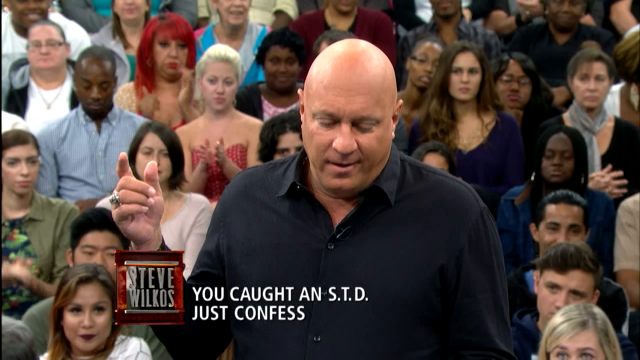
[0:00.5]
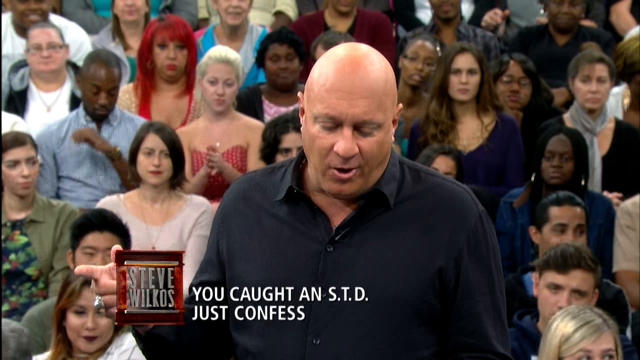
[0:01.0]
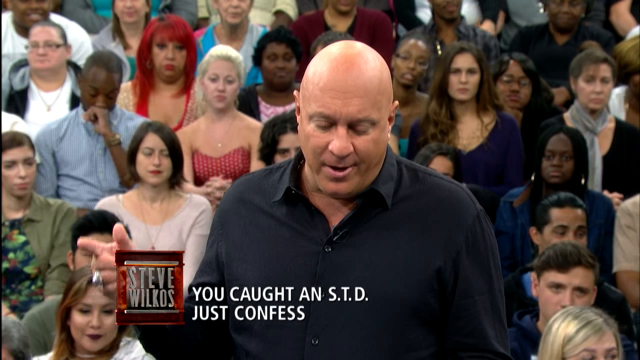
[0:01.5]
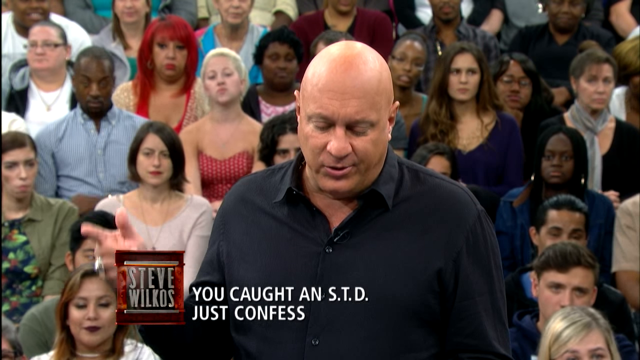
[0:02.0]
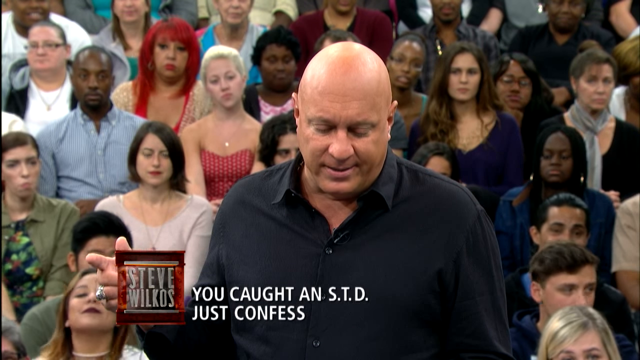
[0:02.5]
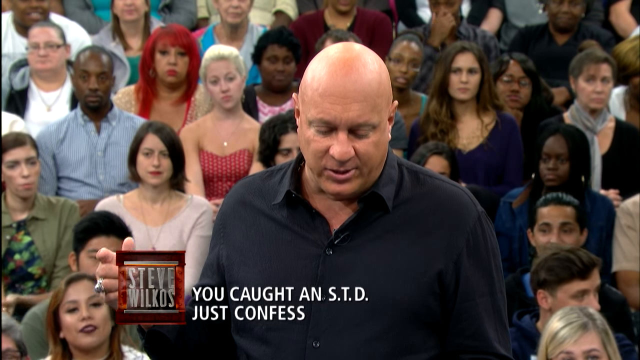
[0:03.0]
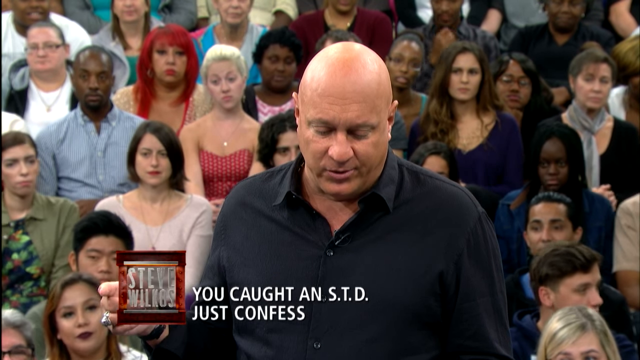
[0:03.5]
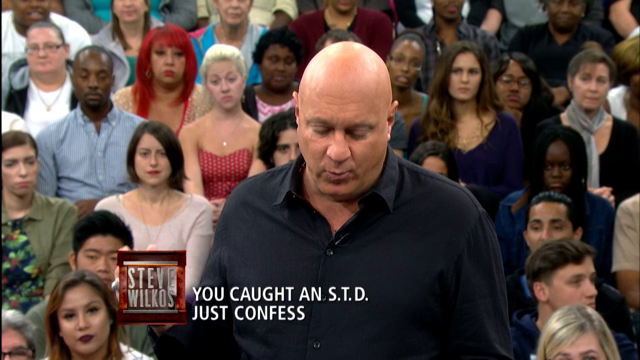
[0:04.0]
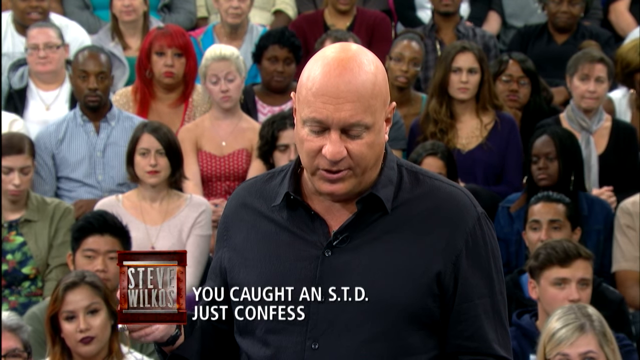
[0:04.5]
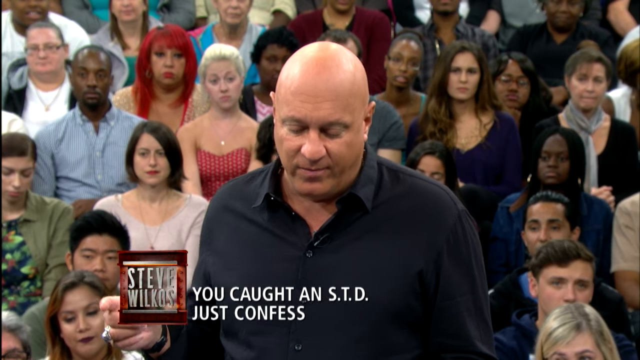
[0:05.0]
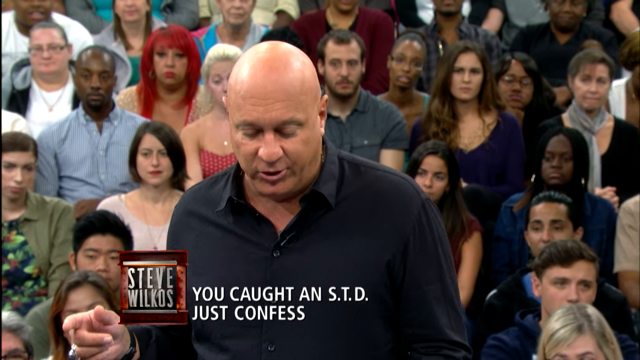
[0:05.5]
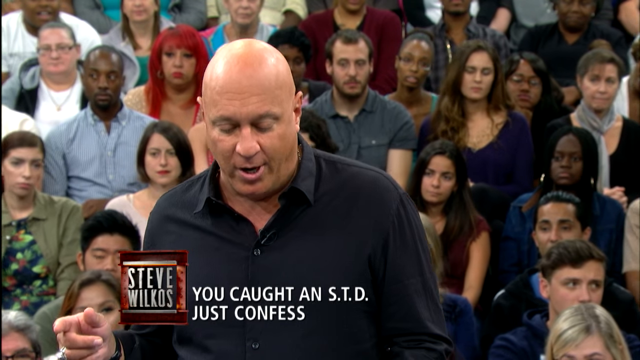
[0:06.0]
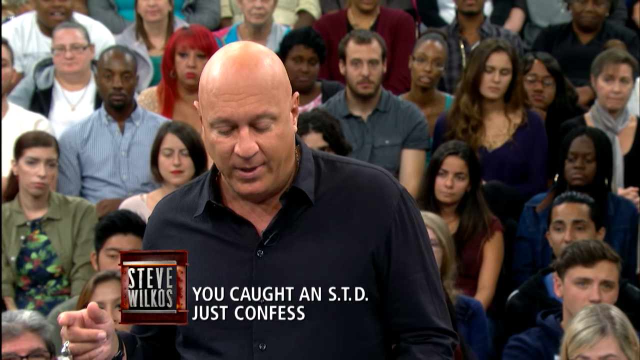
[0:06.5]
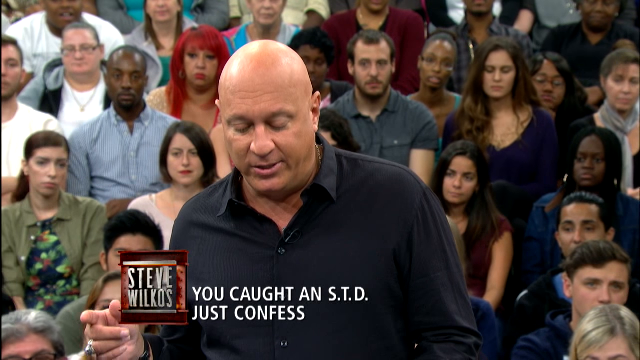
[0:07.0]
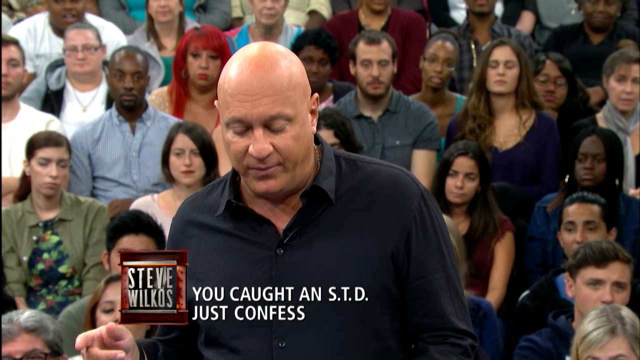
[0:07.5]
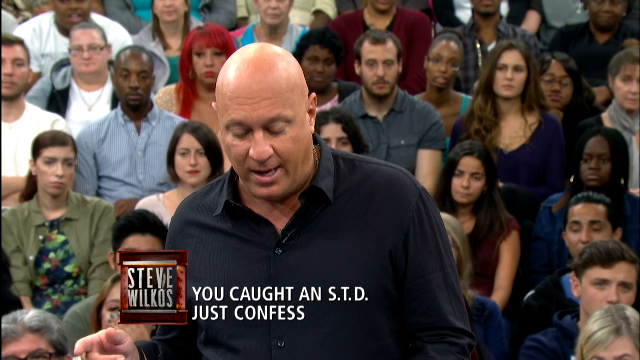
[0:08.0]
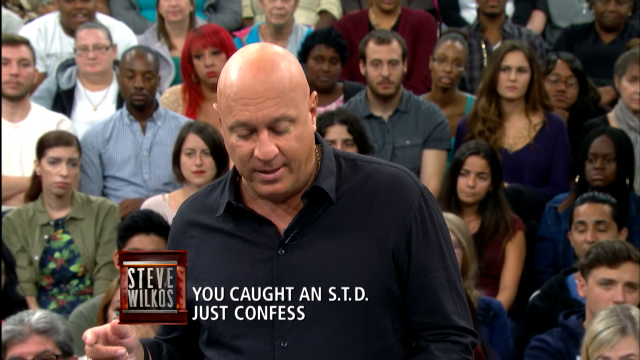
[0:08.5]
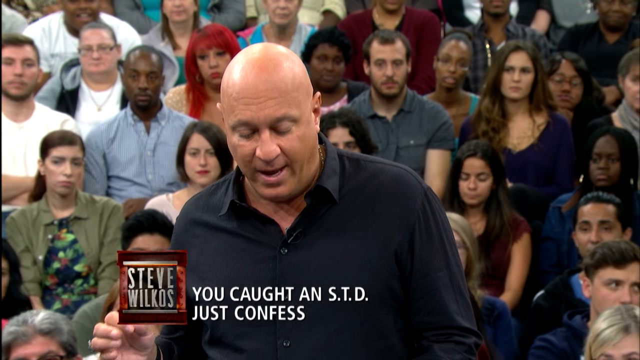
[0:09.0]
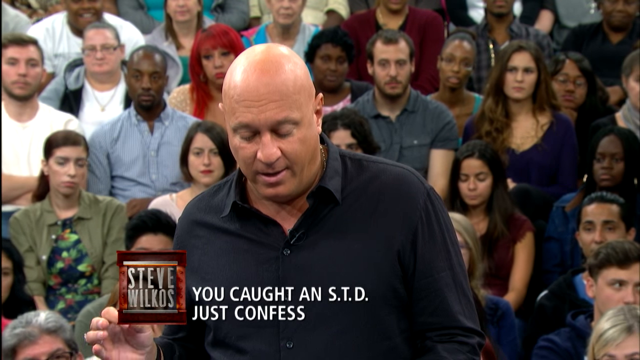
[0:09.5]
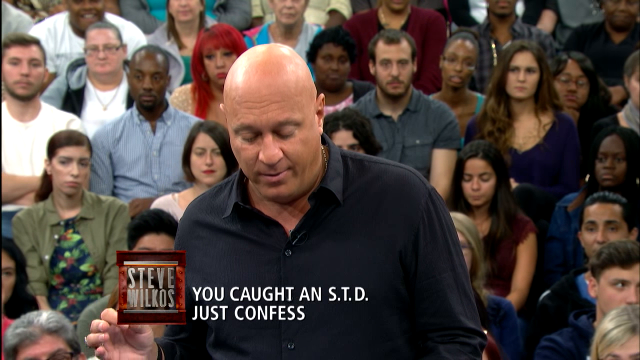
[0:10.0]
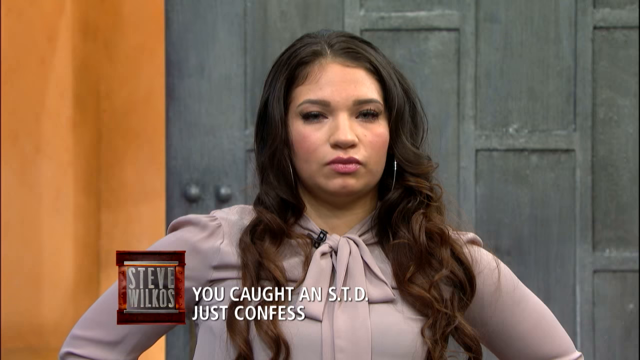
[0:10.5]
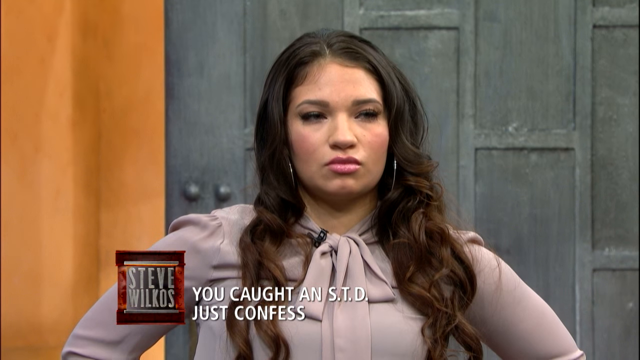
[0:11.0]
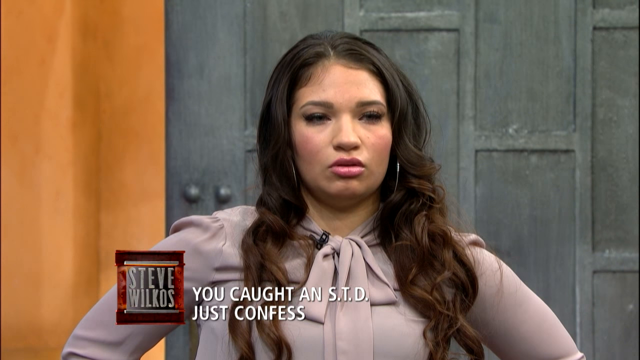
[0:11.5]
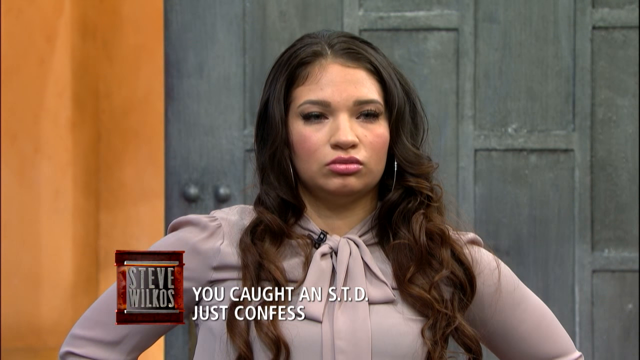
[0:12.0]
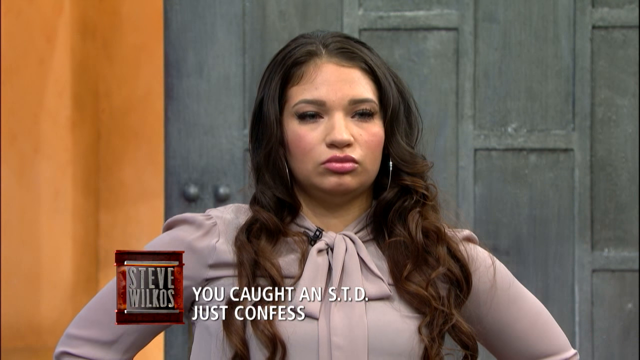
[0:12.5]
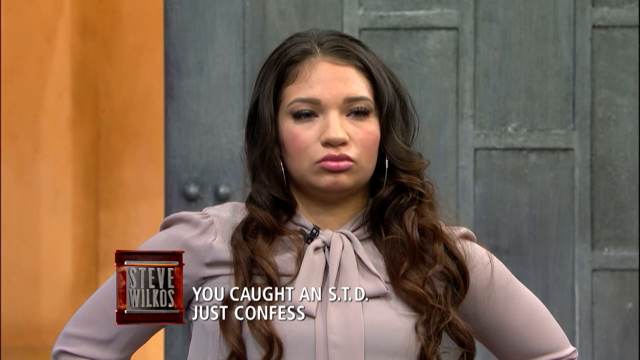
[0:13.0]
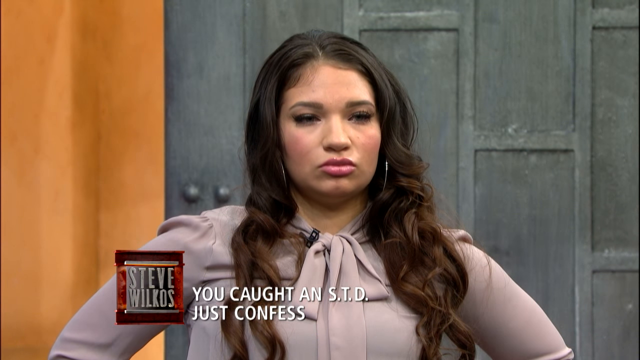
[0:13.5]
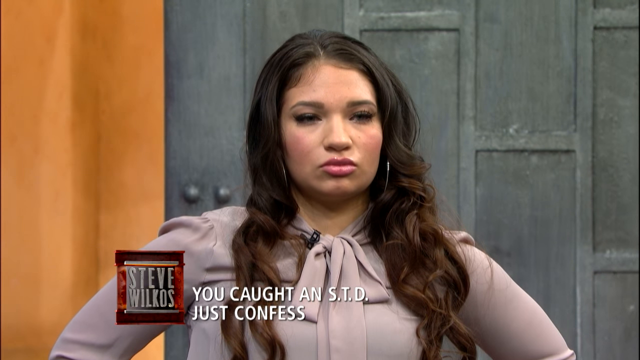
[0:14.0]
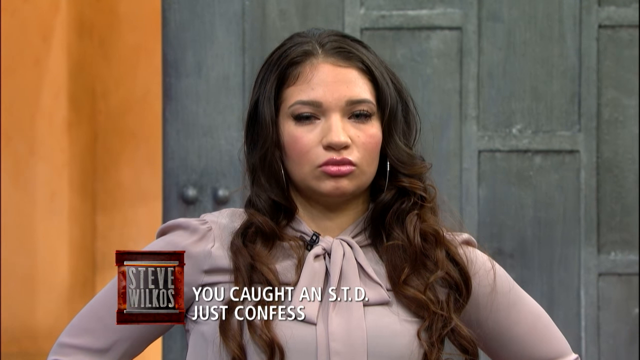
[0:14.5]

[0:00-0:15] The video begins with a bald white man who is looking at a card and talking while pointing with his left hand. He wears a black long-sleeved button-up shirt, and behind him is a studio audience made up of a wide range of different people, all watching intently. On-screen text in front of him reads "Steve Wilkos" and "You caught an STD, just confess"; "Steve Wilkos" is in a box and the other text is white. The shot then switches to a woman in a beige blouse with curled brown hair and large hoop earrings. She has a serious expression and looks like she might be mad or upset. To her left is an orange wall behind her, and on the right side is what looks like a large gray door. At the very end, the video switches to a young Black man who is seen for just a moment.